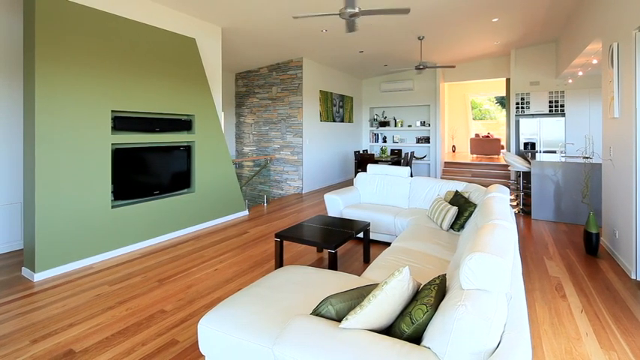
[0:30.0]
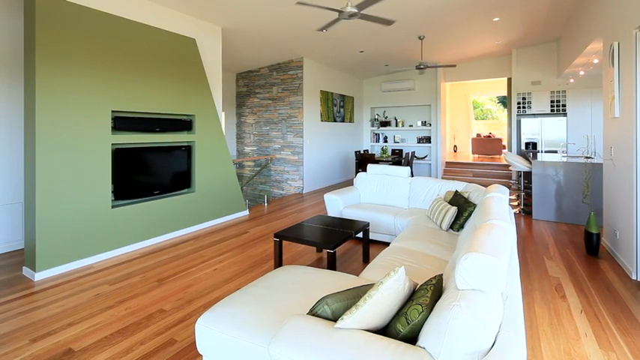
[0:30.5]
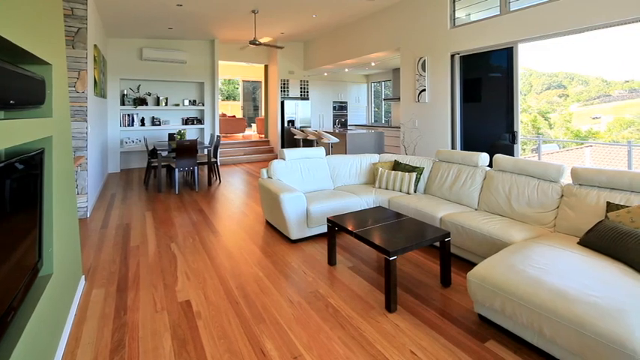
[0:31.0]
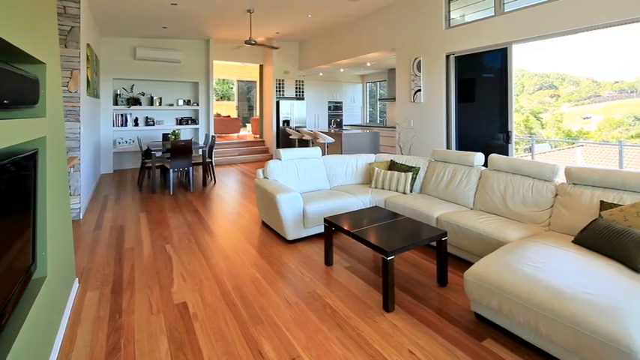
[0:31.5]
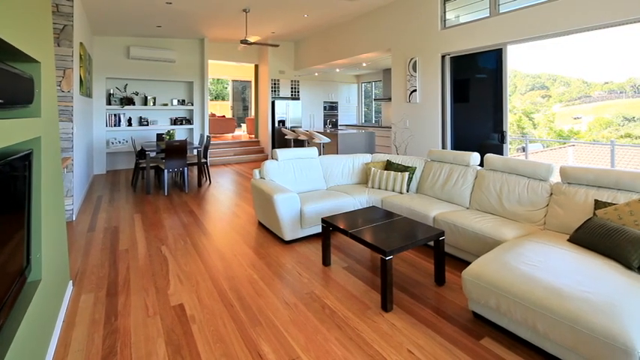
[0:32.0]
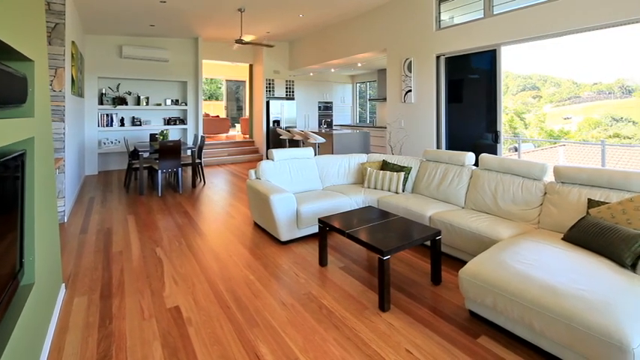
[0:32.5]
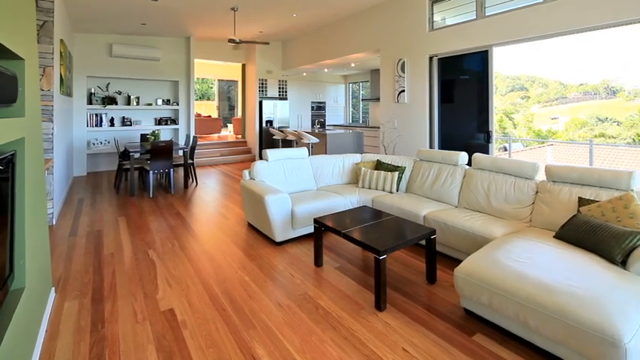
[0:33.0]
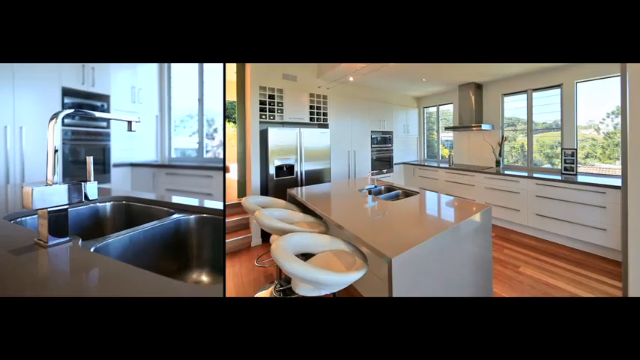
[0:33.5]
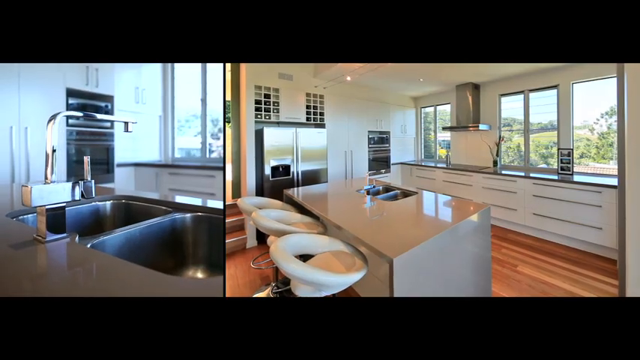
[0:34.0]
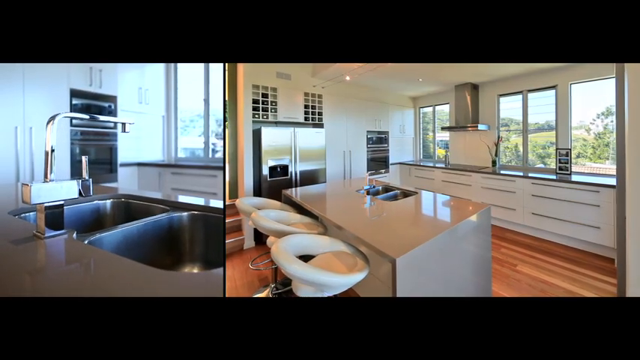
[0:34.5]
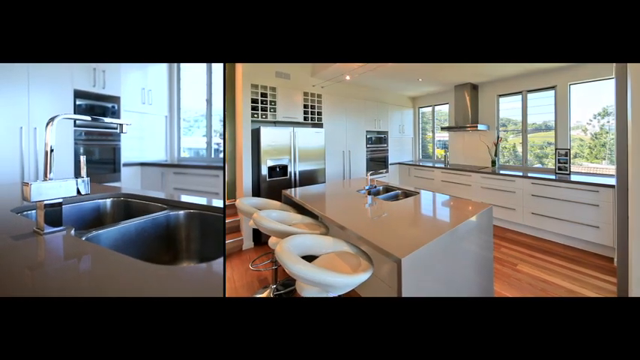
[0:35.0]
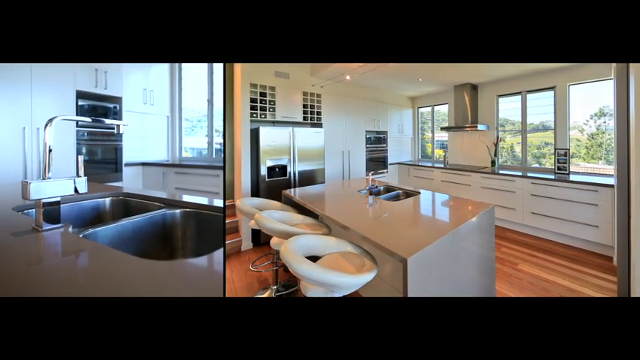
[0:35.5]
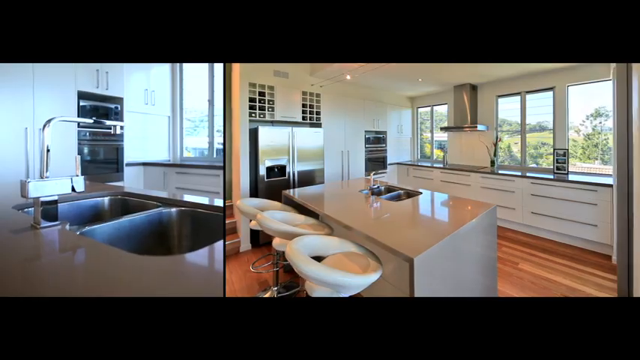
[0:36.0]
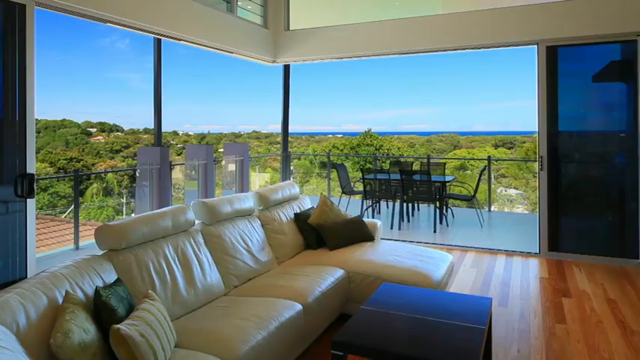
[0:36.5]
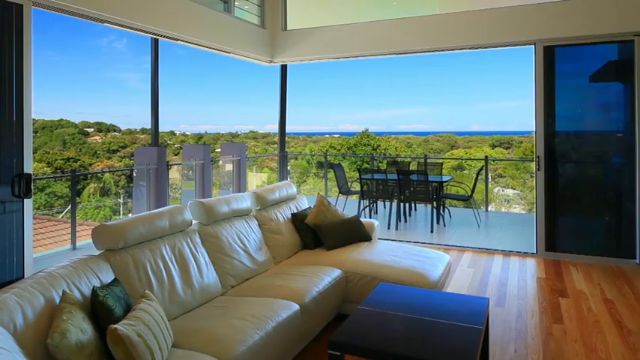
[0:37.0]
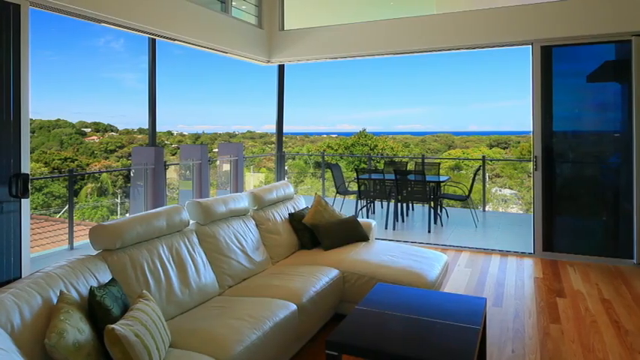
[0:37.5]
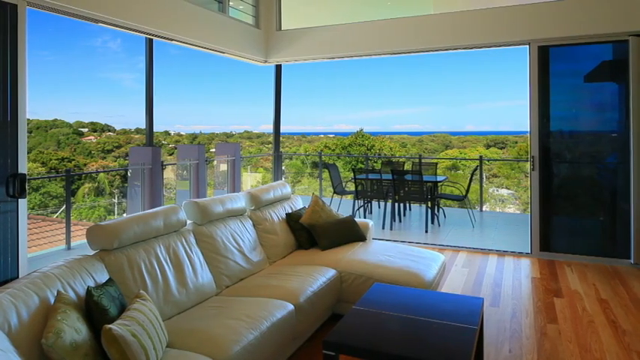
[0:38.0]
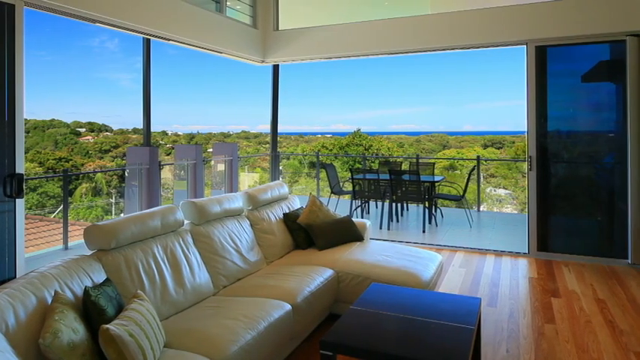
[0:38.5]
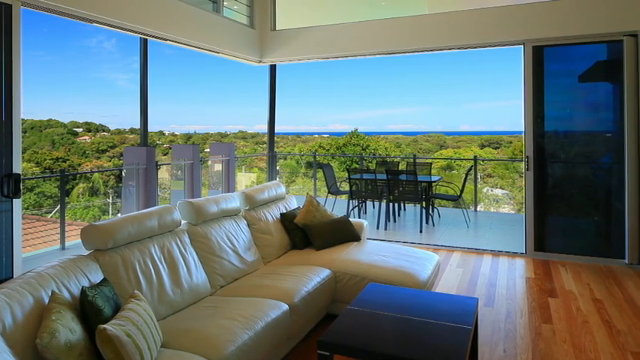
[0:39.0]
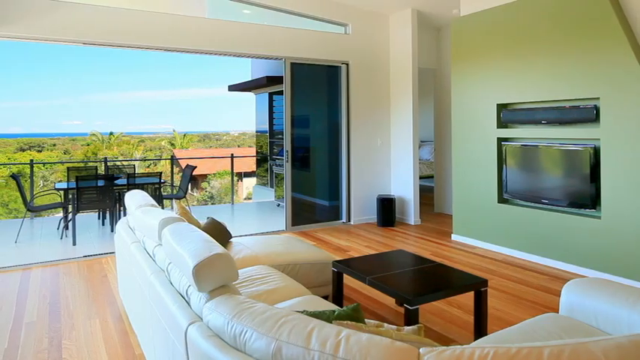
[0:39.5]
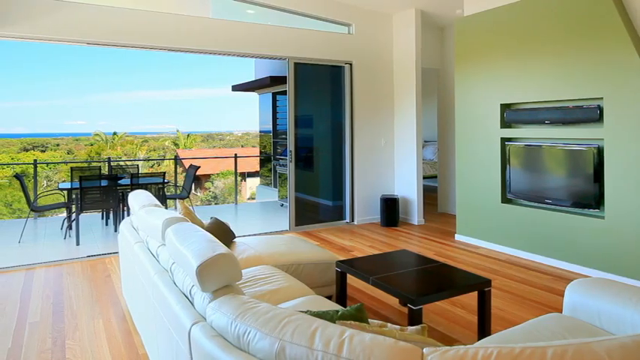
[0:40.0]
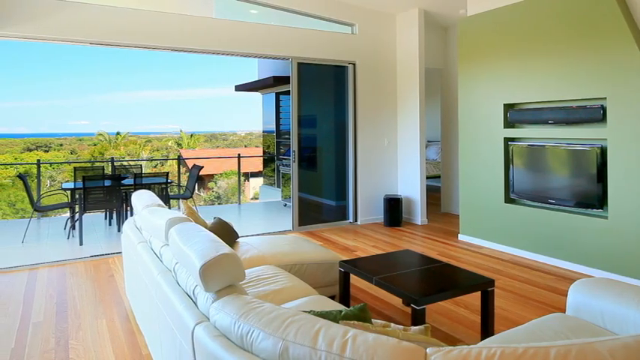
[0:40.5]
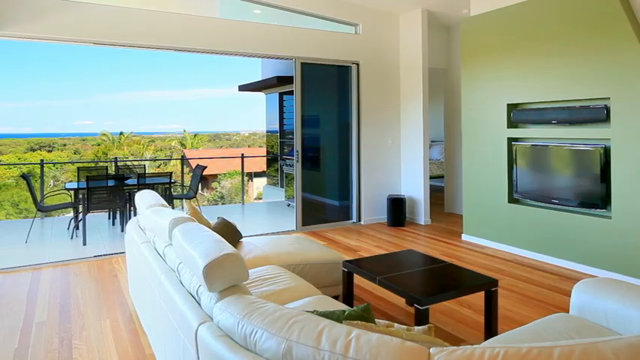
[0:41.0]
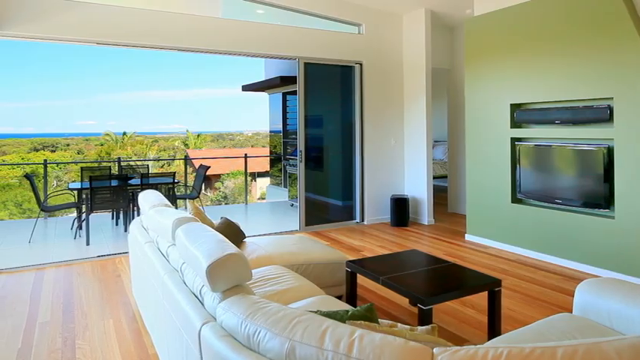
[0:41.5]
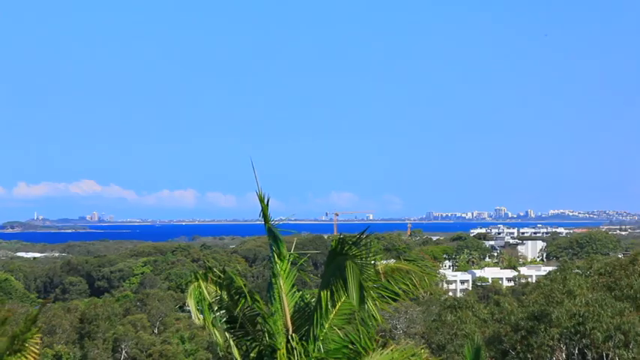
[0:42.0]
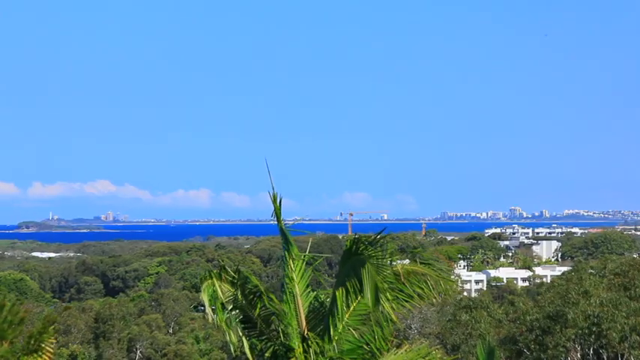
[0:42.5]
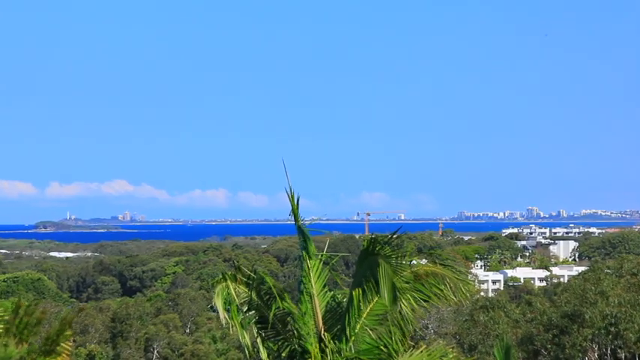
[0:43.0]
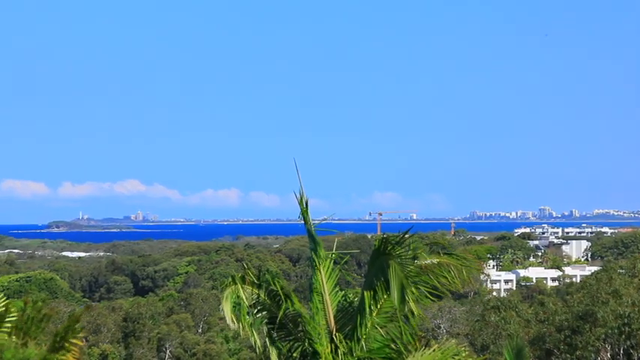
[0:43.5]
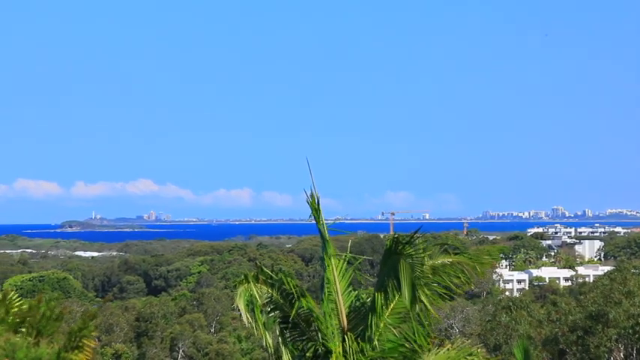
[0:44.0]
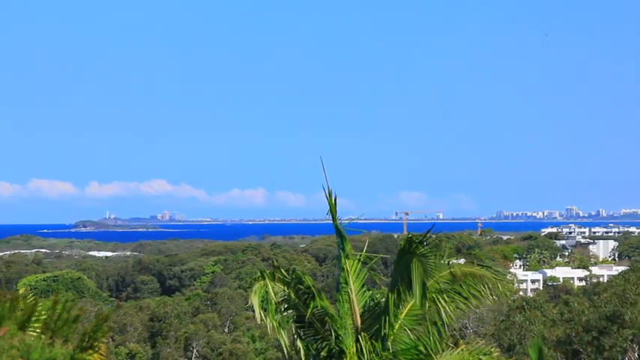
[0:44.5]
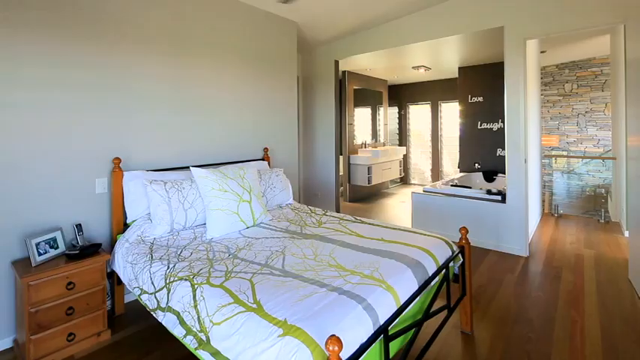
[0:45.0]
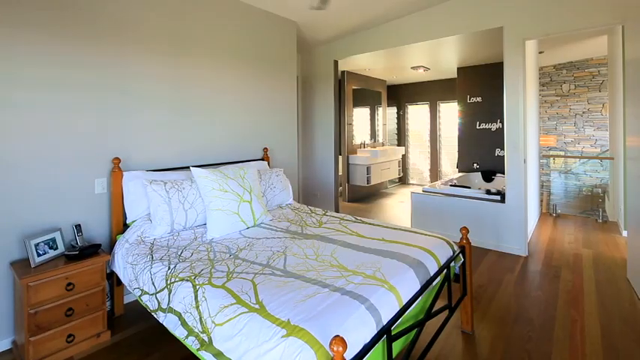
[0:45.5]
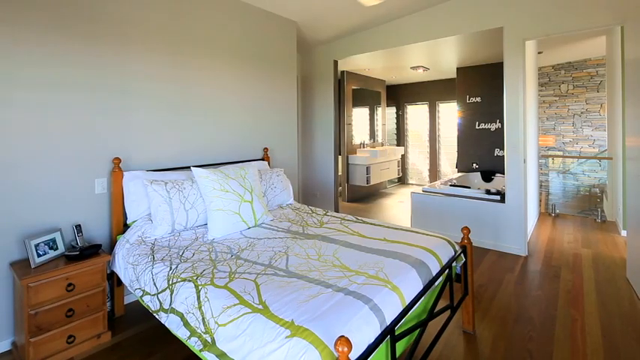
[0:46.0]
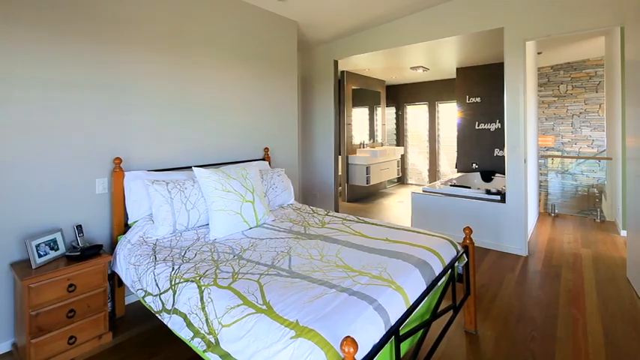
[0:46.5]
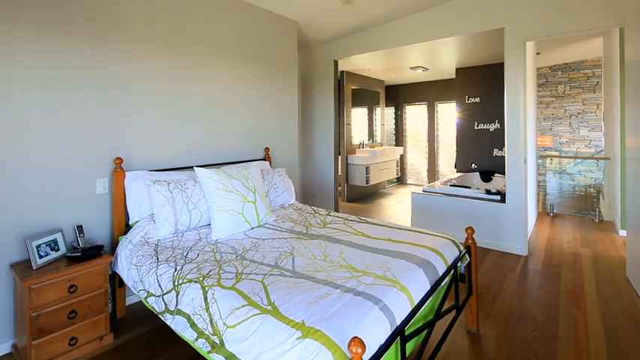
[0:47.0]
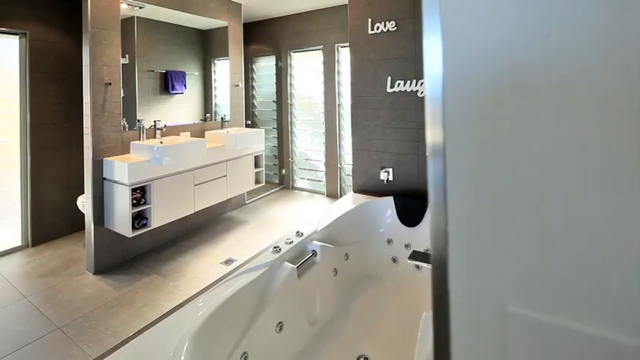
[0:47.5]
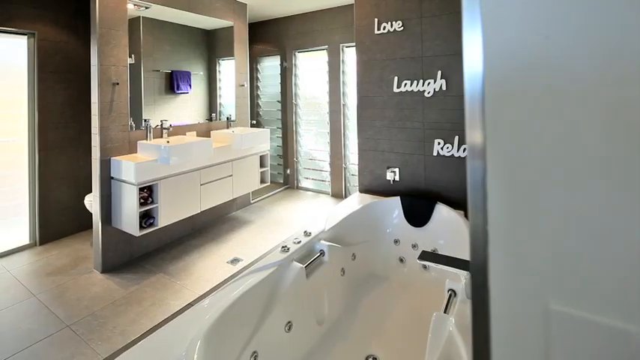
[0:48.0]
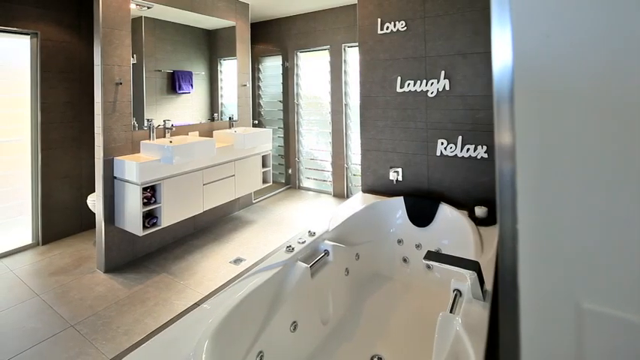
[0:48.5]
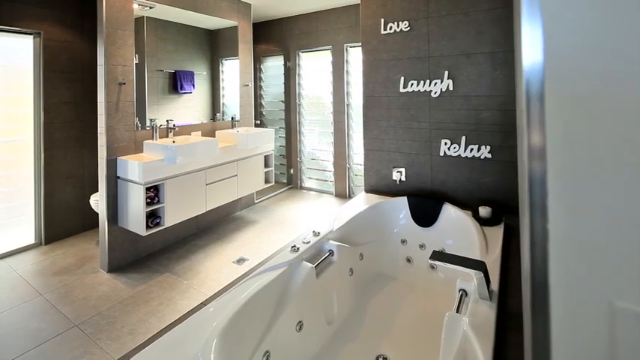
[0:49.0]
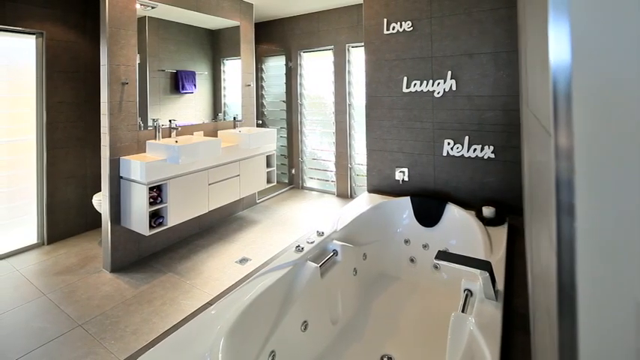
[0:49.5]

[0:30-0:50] More indoor areas of the house appear. First is the living room, which has a very long, wide, U-shaped couch. The floors inside are hardwood. A bit of the kitchen is shown, along with another view of the living room that reveals the patio, which has a big black table with six black chairs. A horizon view of the surrounding area follows, with a lot of trees growing out and a lot of water. Then comes an inside view of one of the bedrooms, connected to a bathroom that is completely open, with the sink and the bathtub visible. It looks like a very fancy living space for a vacation.